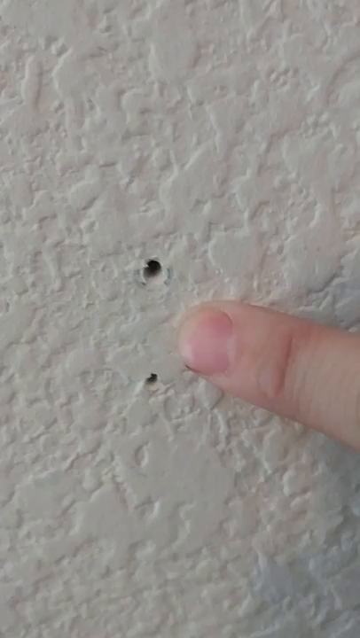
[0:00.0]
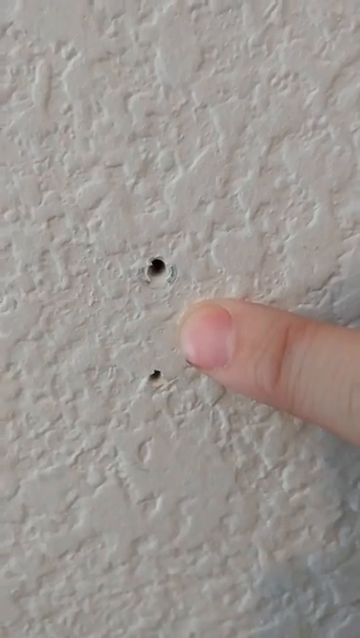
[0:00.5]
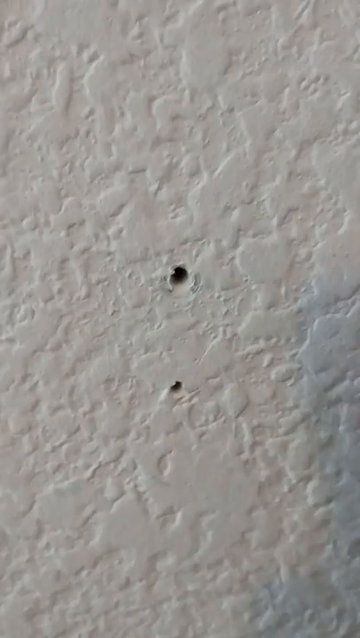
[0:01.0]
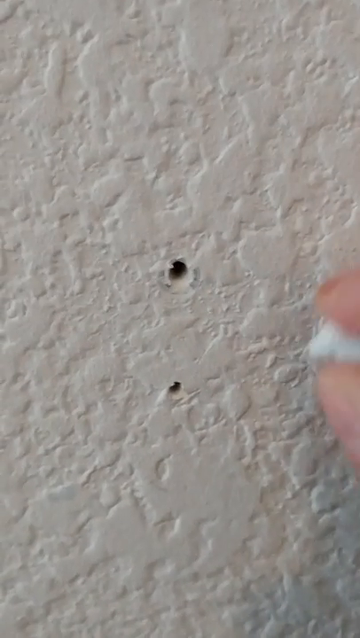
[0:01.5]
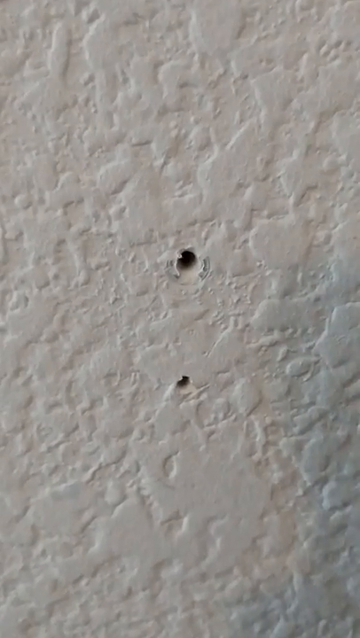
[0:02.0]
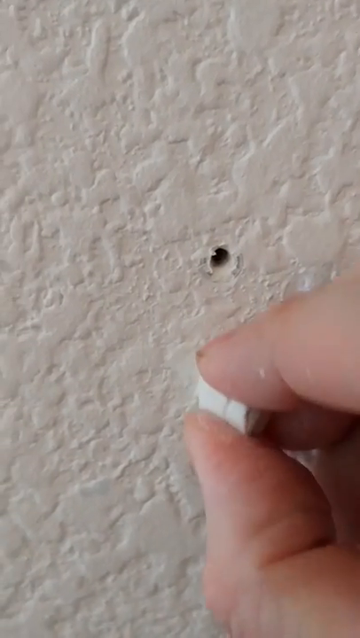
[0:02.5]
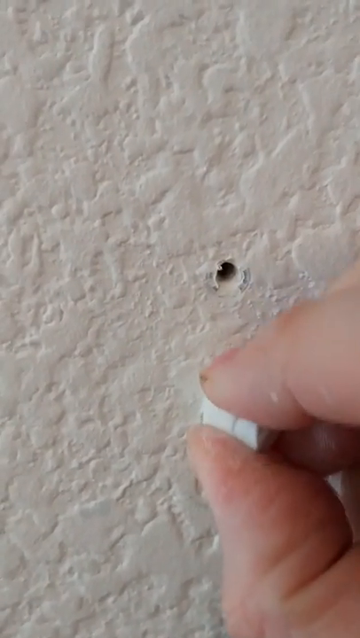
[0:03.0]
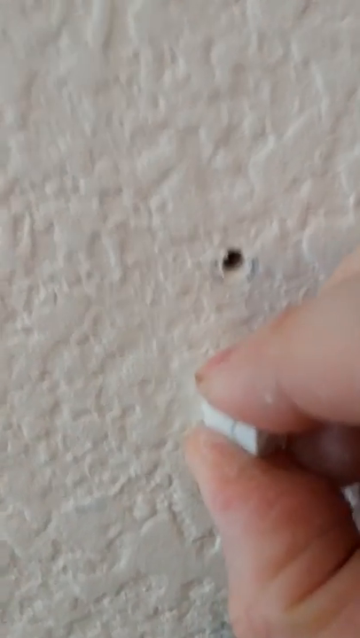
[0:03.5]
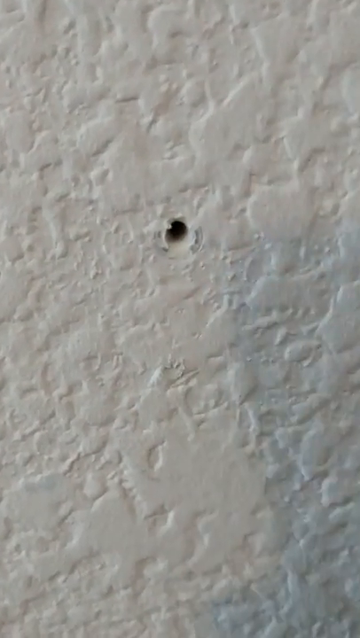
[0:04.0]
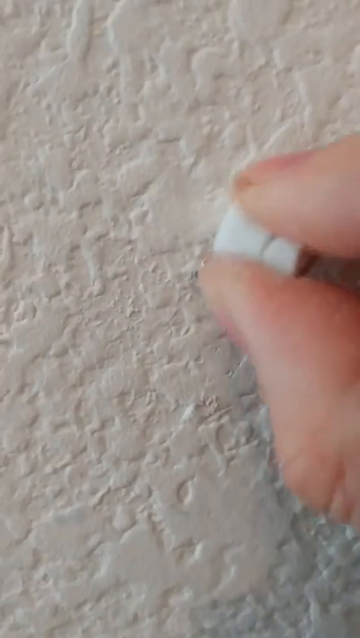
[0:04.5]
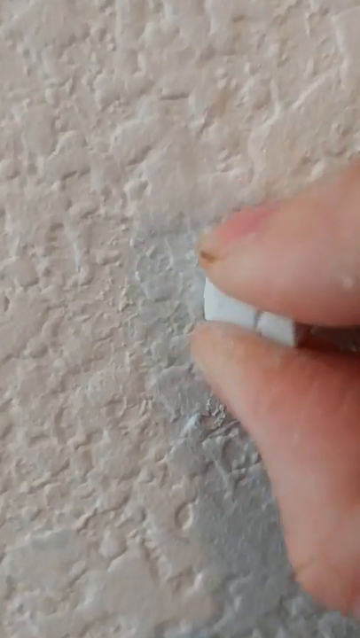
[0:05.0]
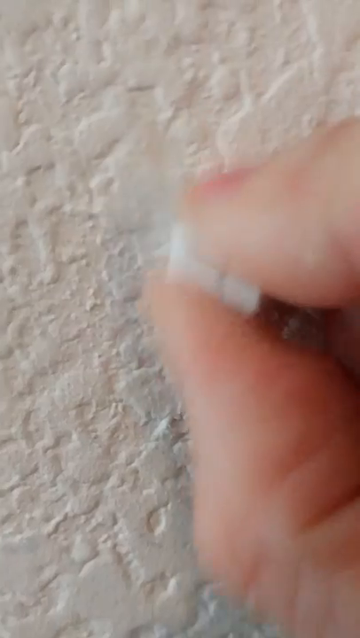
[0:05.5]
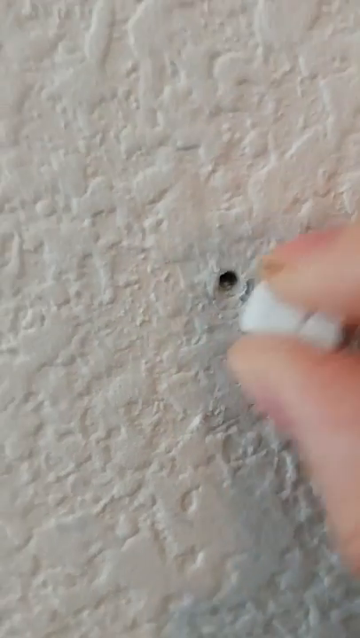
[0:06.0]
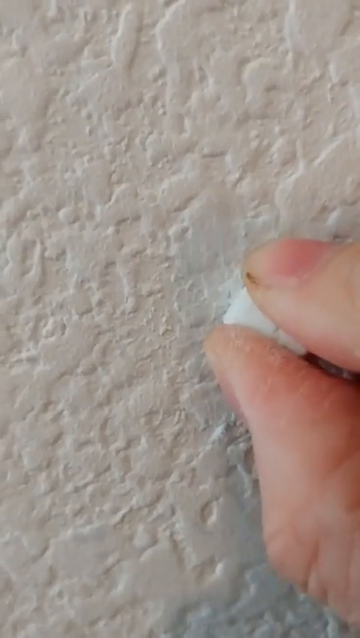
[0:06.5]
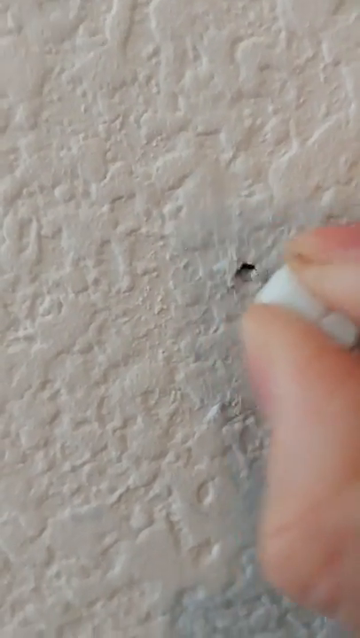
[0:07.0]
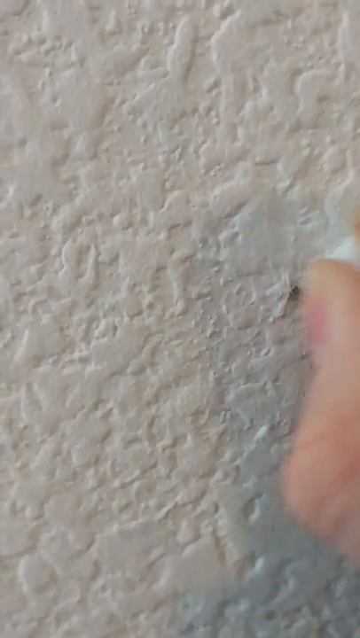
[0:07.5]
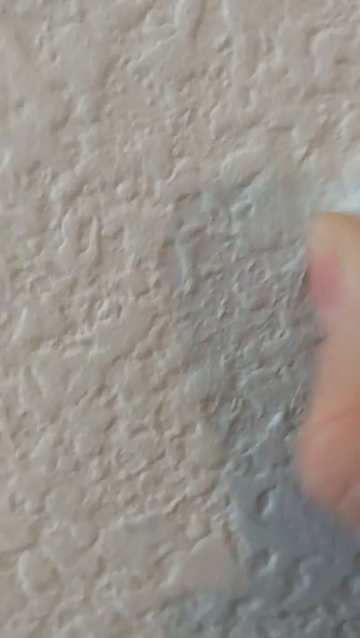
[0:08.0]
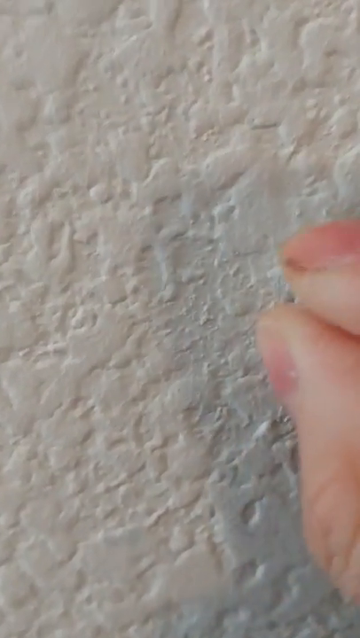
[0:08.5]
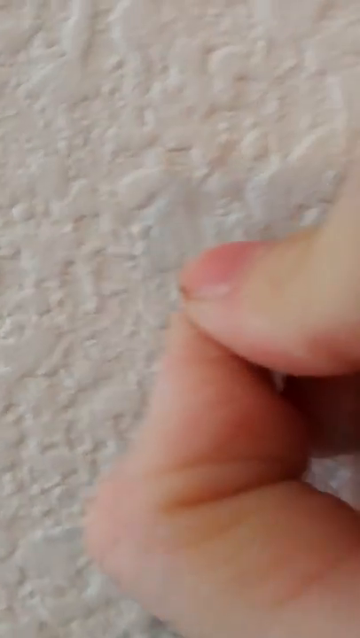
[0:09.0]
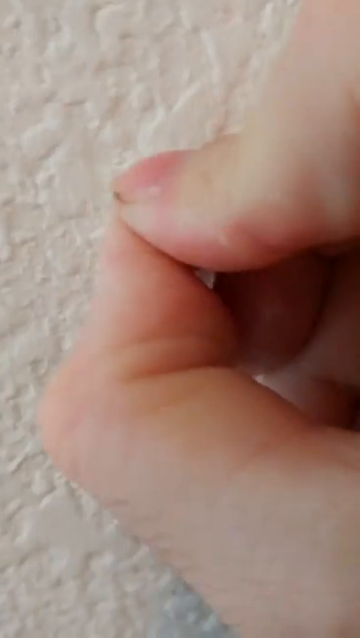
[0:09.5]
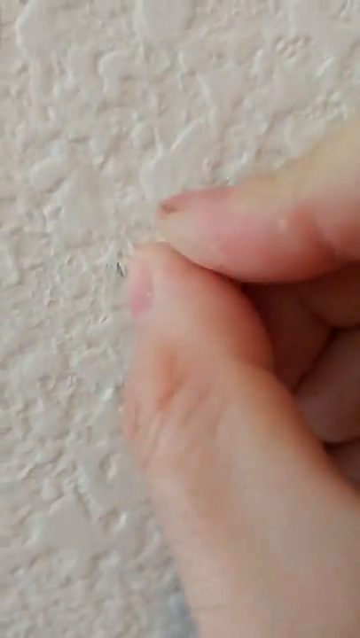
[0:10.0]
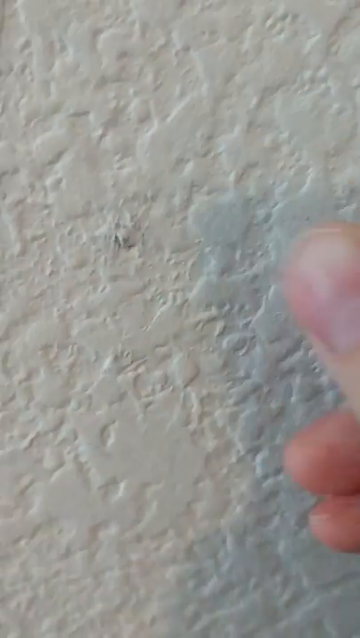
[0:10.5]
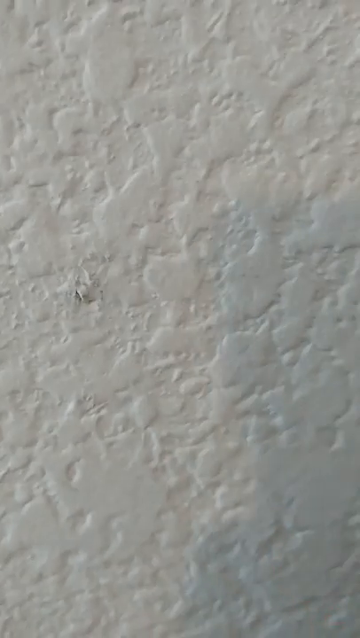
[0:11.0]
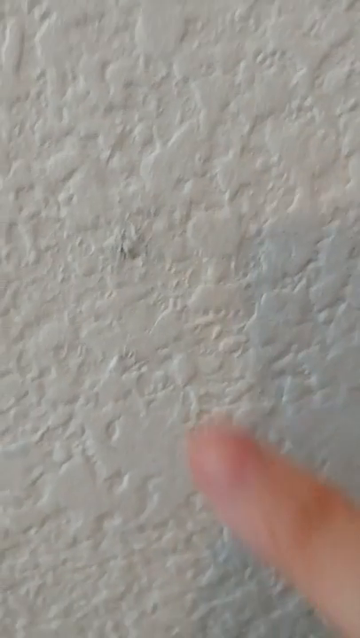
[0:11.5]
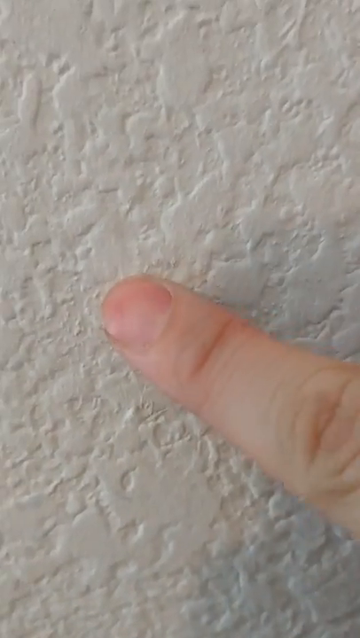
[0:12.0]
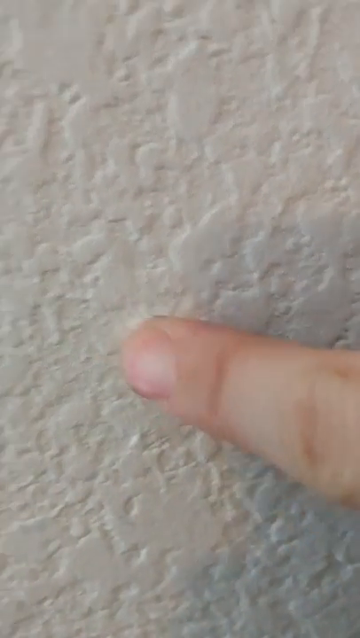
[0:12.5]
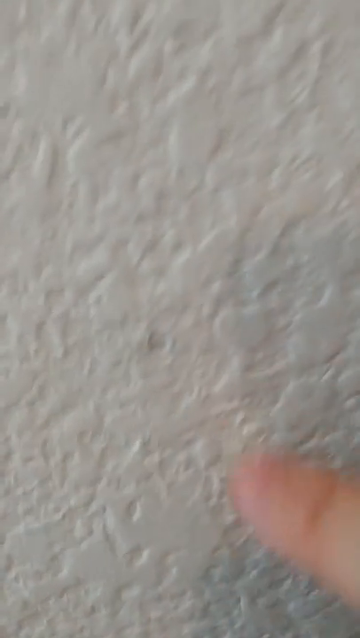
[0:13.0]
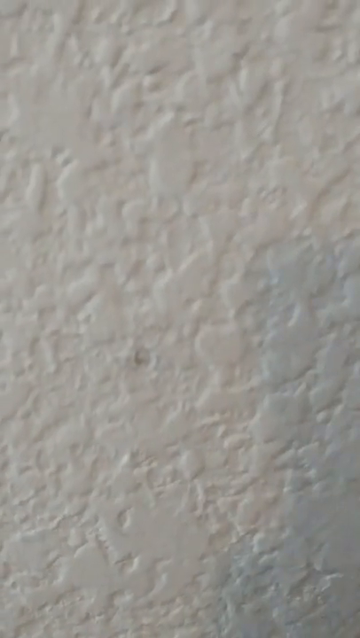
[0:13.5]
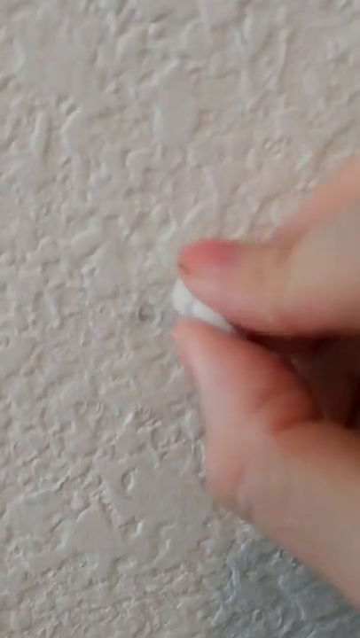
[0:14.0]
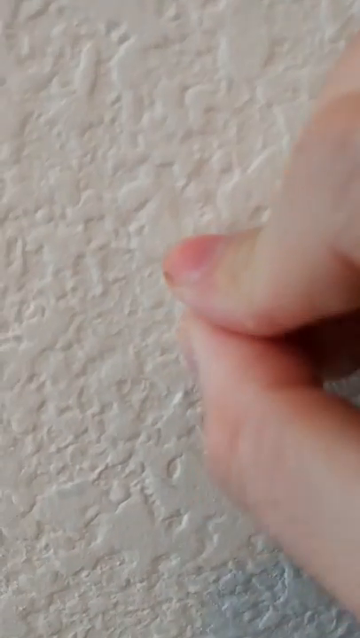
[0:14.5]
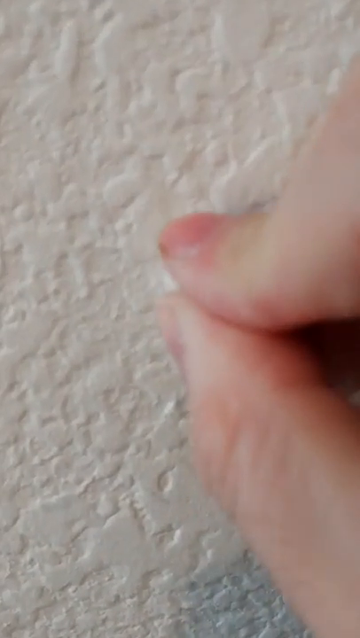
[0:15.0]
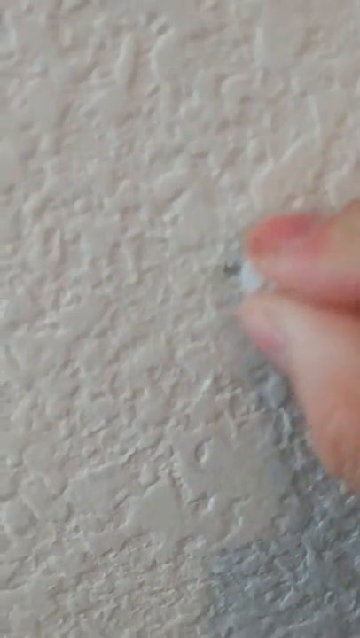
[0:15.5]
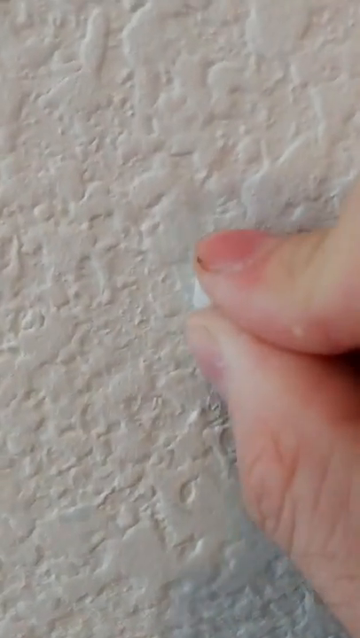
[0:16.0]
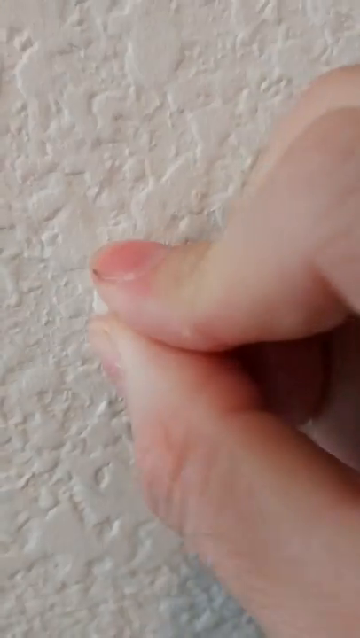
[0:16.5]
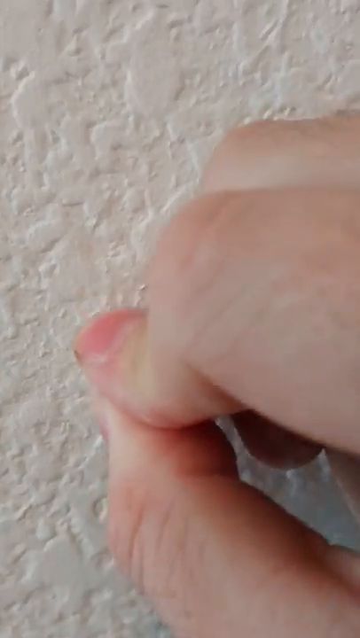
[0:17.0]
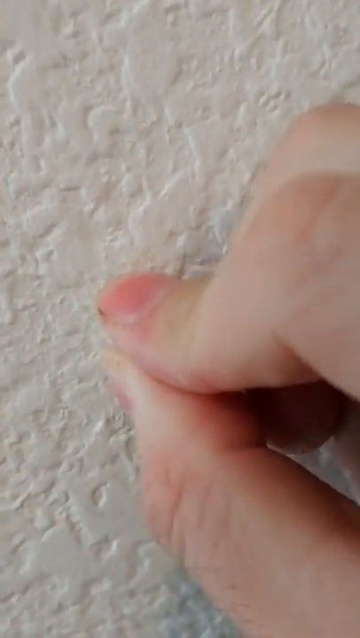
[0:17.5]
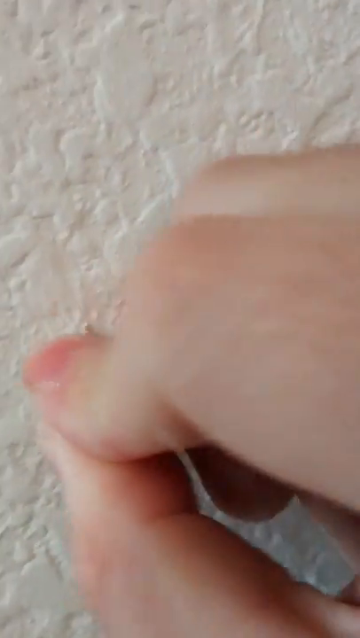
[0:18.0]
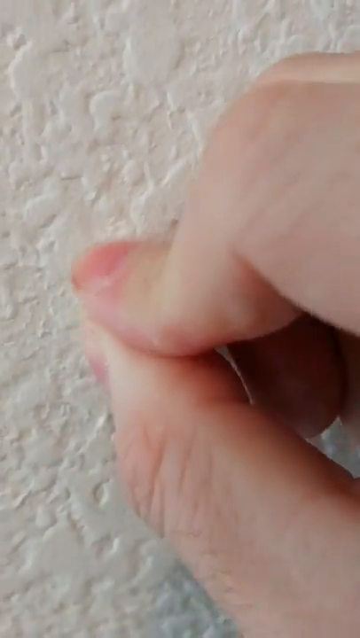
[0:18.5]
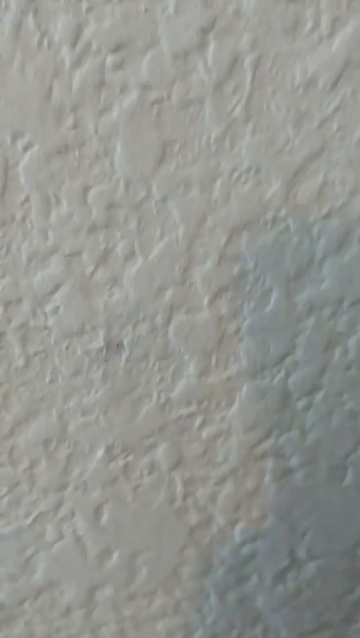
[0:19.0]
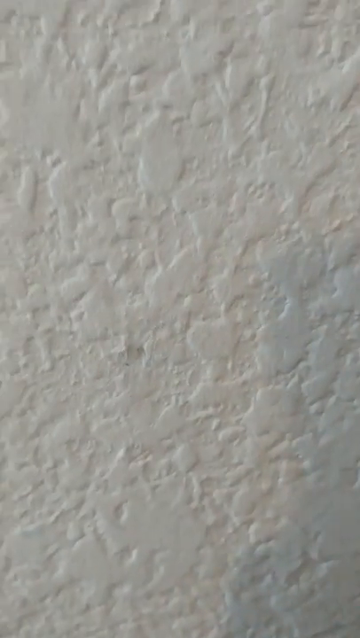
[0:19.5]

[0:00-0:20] A very close-up image shows a section of what looks to be a spackle, stucco, or sheetrock-type wall, with a finger pointing at two screw holes or holes in it. The person takes a piece of what looks to be chalk, rubs it, breaks it off, and pushes it down into the holes. They then use their finger to push in more and more chalk, shoving it down into the hole. As they do, the chalk appears to fill the hole in, making the wall solid again.